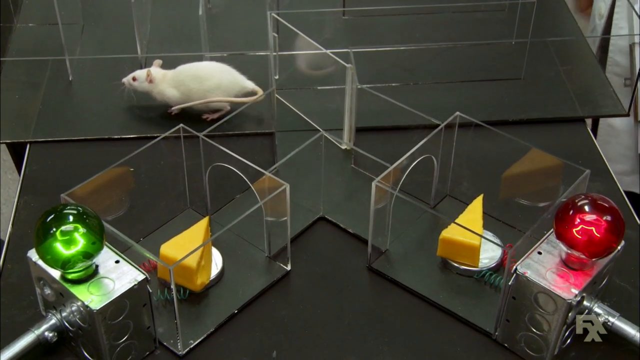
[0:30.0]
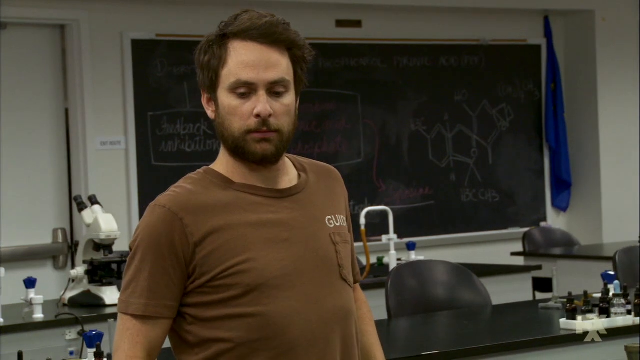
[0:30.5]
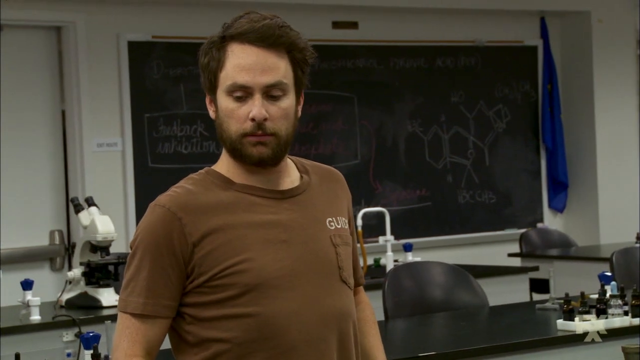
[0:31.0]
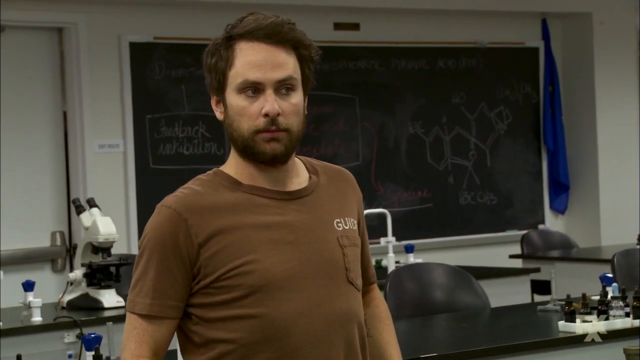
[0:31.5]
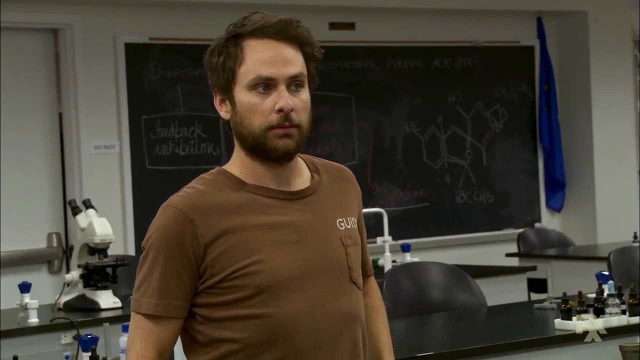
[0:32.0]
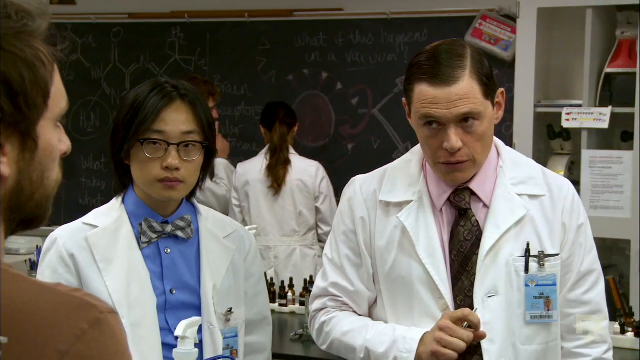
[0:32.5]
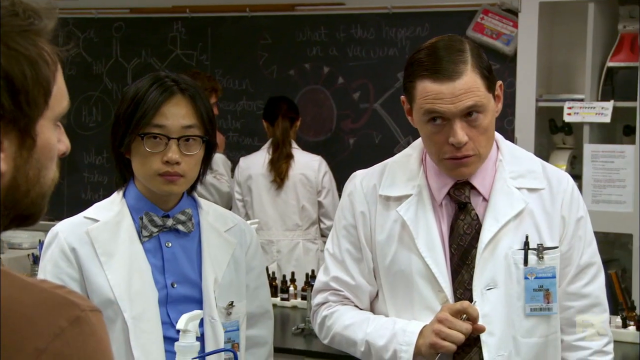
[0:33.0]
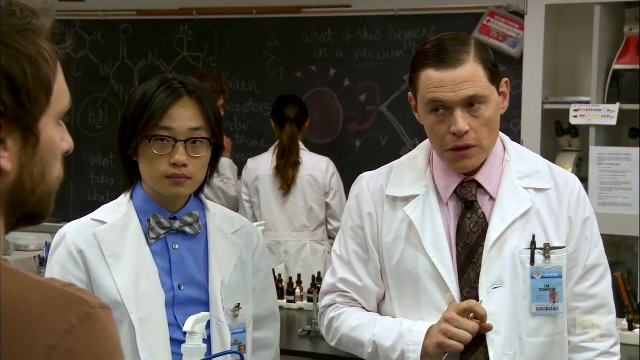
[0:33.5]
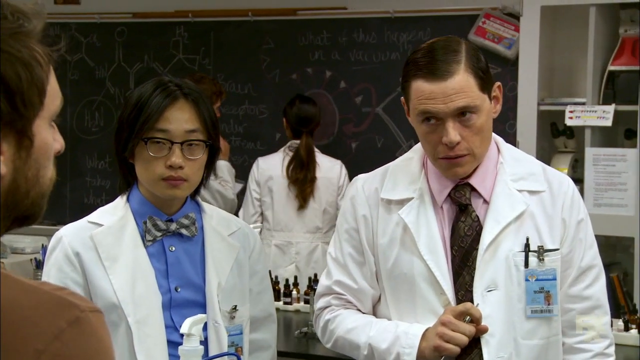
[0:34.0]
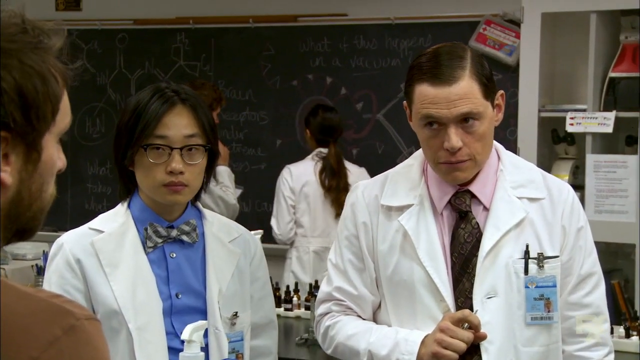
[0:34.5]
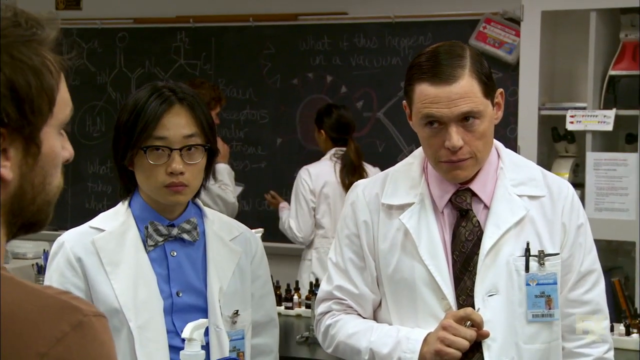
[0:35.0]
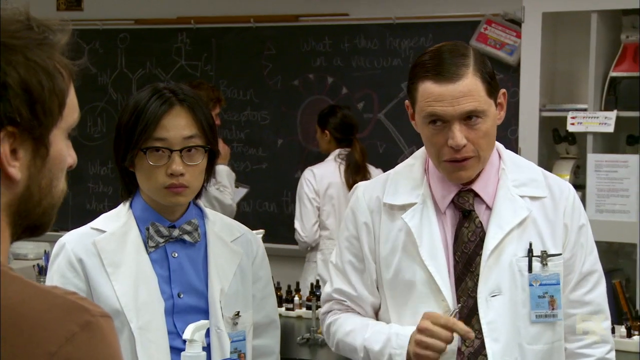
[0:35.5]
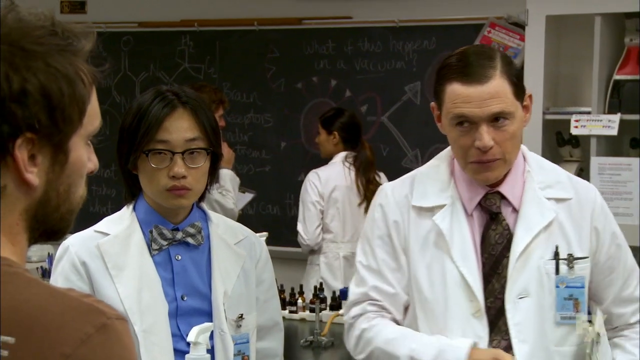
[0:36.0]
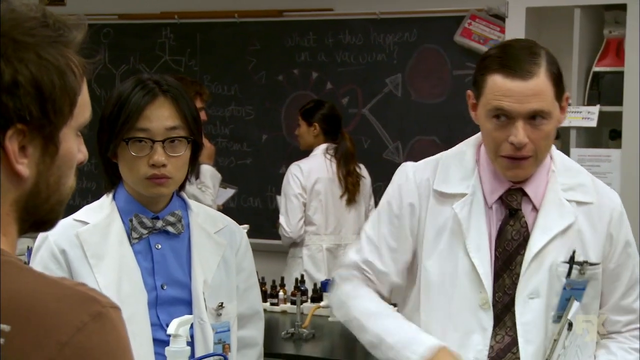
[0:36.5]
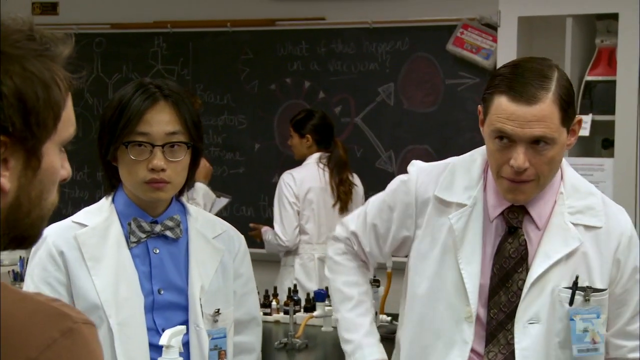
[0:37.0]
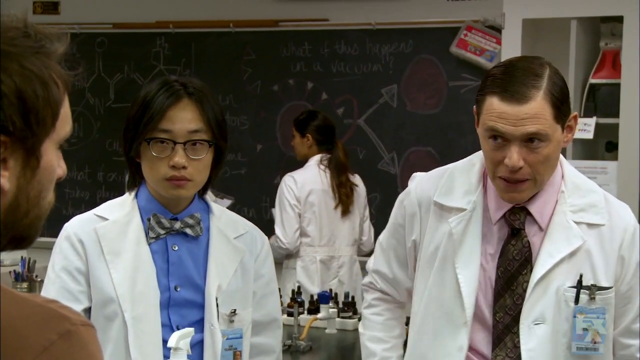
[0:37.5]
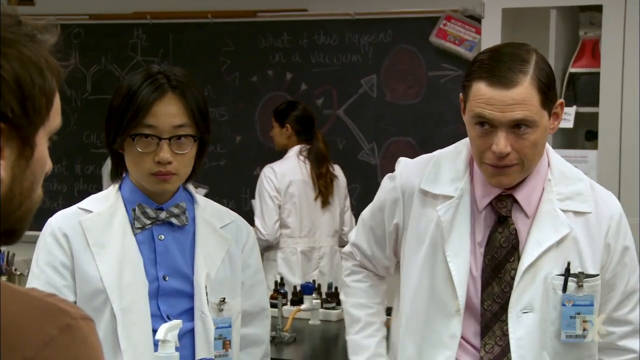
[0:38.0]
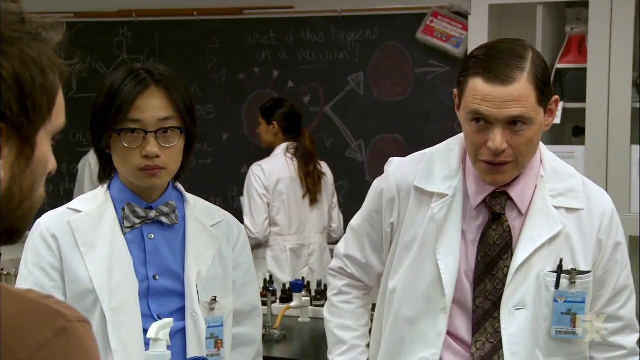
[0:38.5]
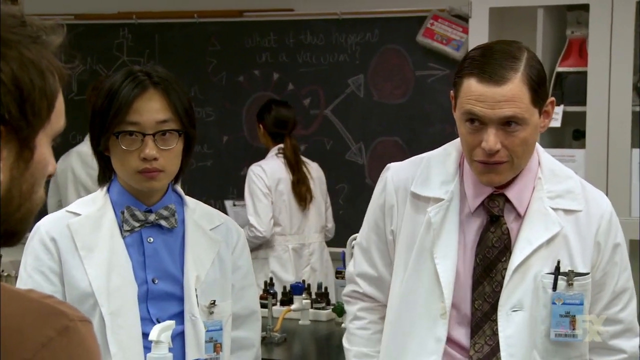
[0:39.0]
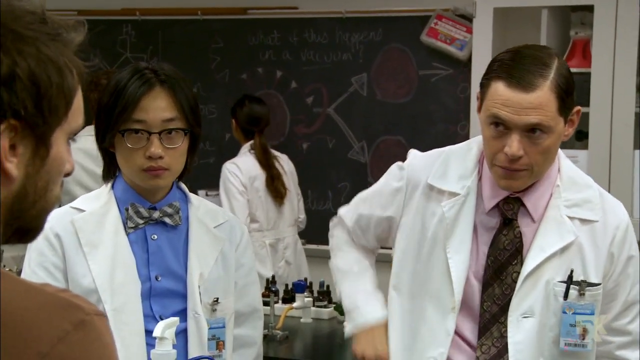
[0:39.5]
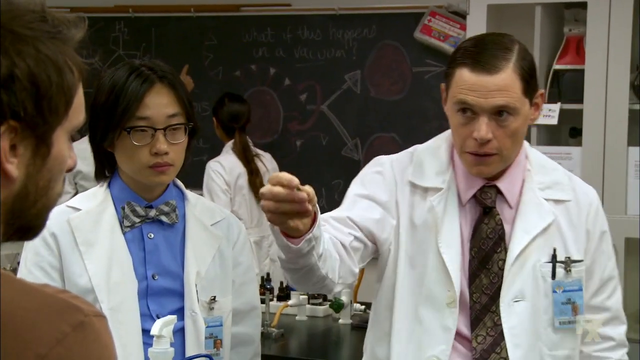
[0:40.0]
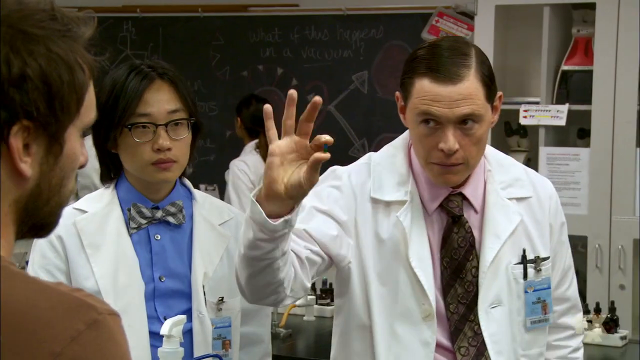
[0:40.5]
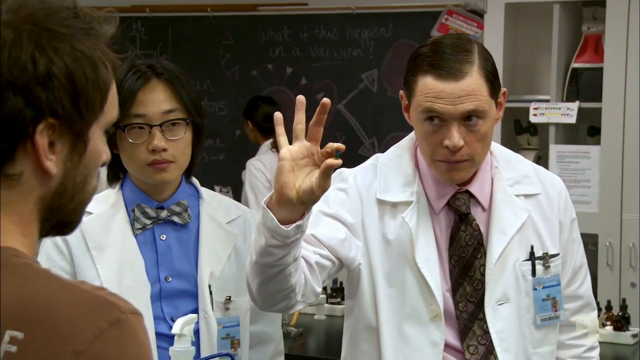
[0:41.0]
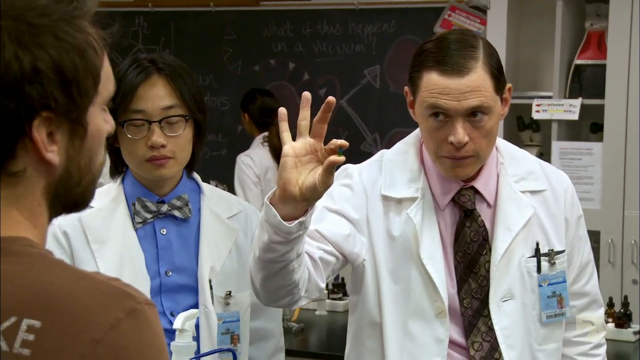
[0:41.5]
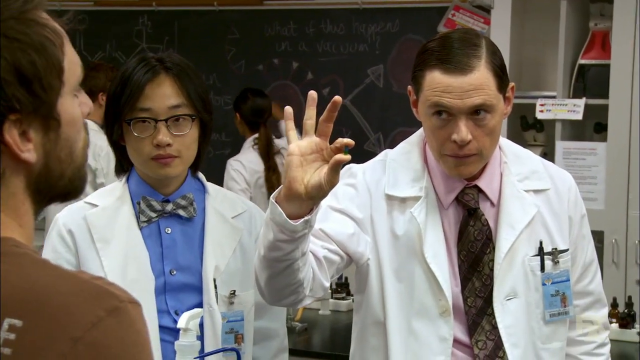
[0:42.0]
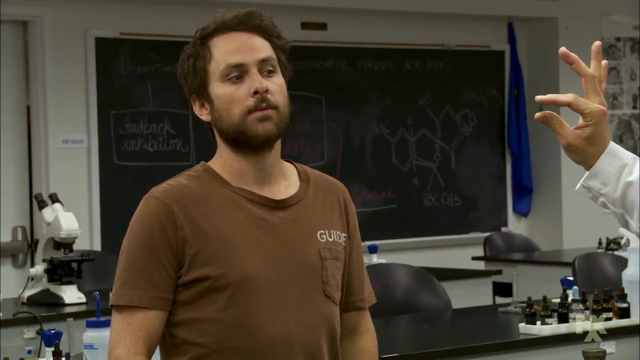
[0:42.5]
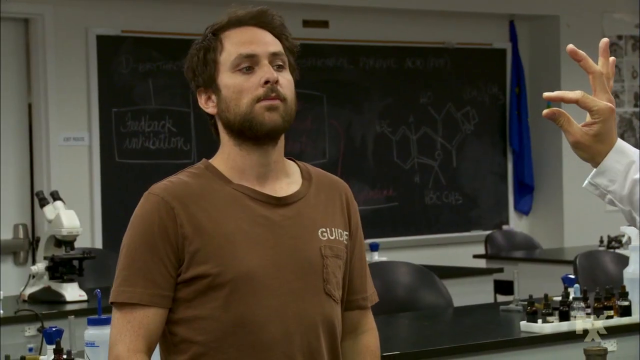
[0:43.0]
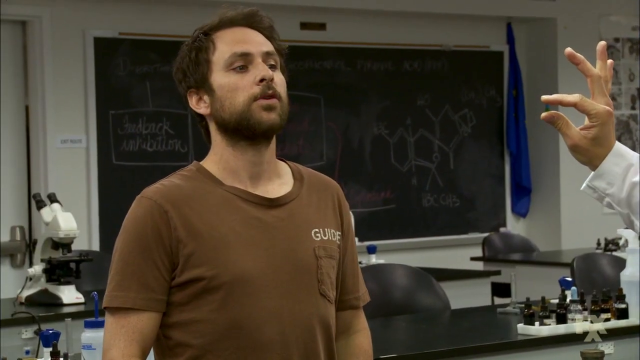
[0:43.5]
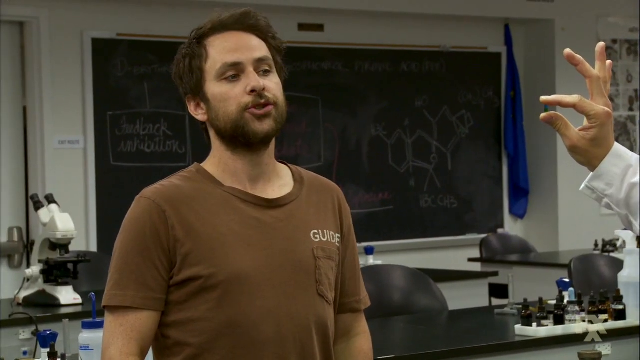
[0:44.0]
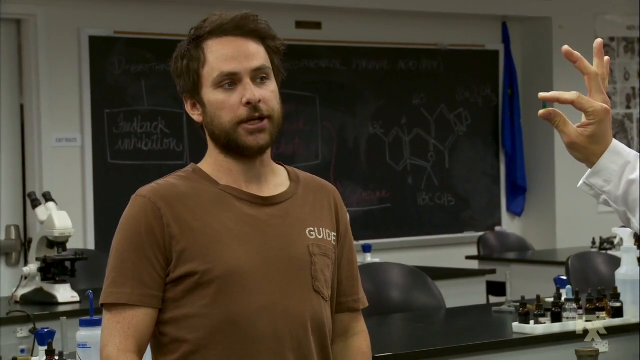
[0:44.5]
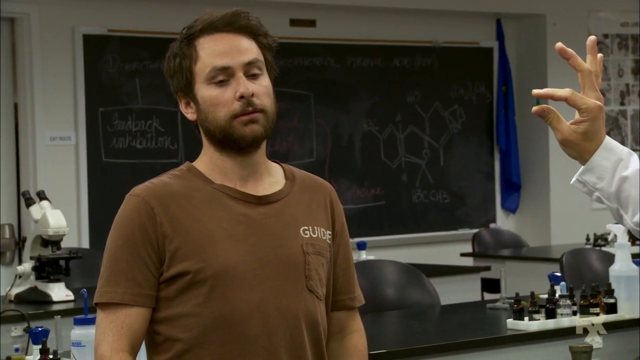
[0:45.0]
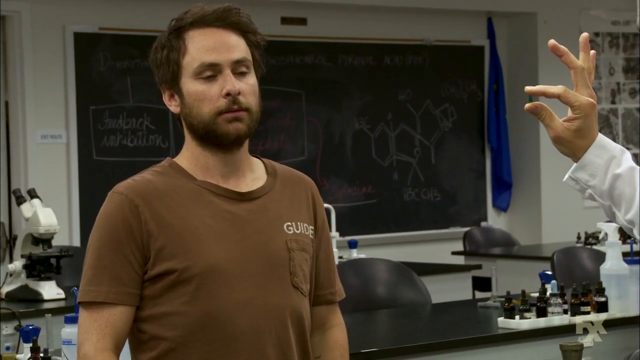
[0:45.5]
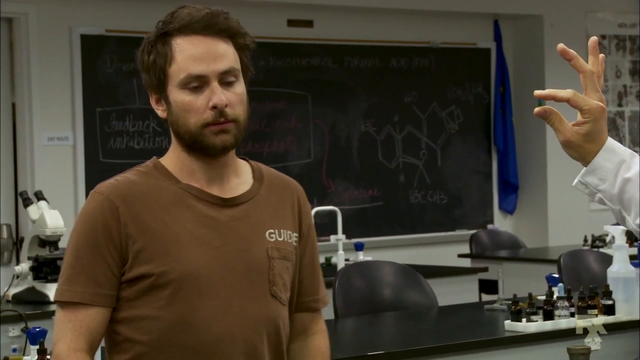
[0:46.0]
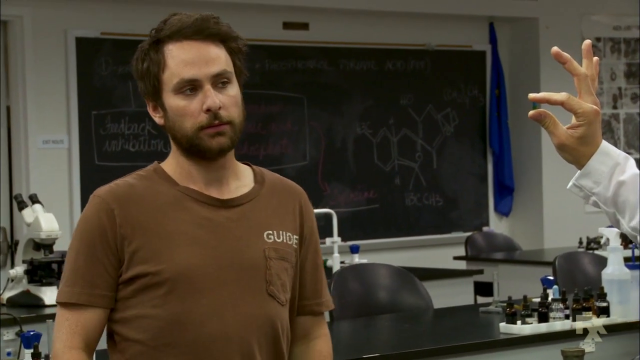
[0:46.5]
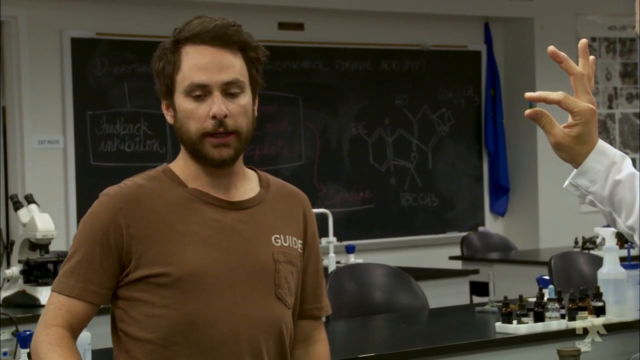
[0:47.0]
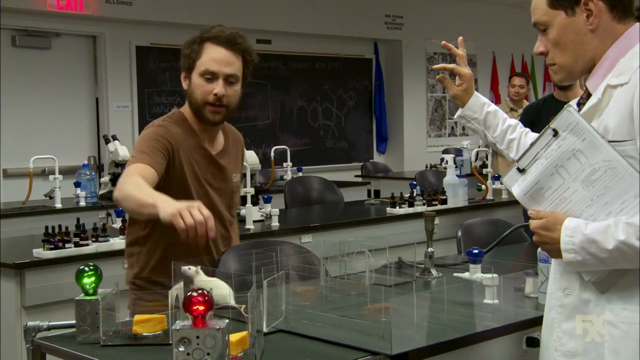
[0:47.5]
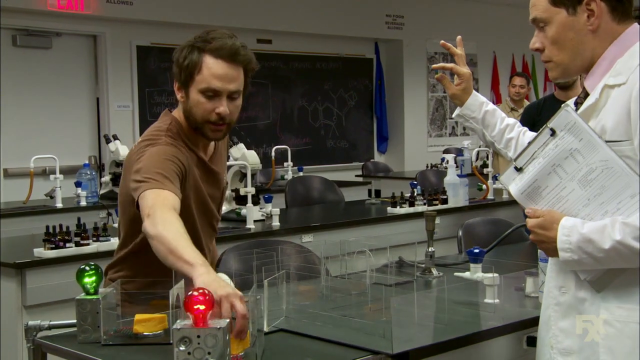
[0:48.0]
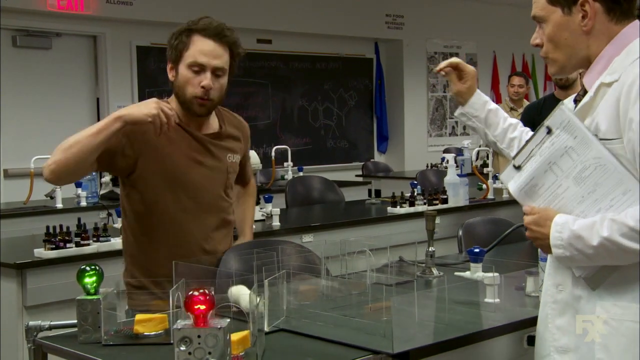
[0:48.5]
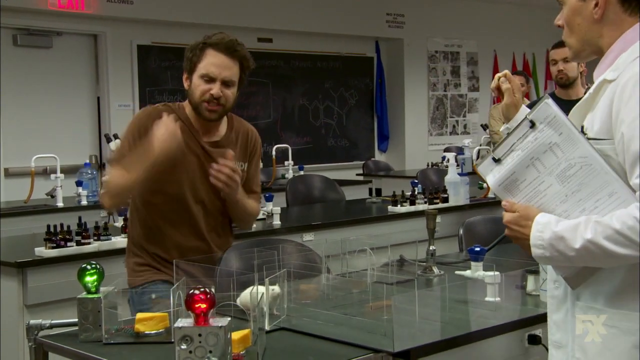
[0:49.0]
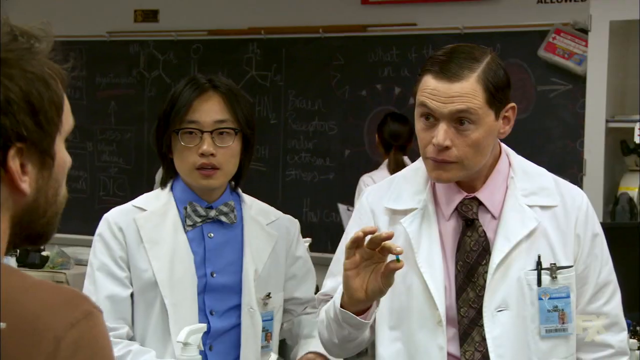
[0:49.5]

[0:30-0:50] A close-up shows the man in the brown shirt, who has a kind of overgrown beard and longer, wavy, thick hair. He gives a side eye to the man with the clipboard, lifts his left elbow slightly, and looks uncomfortable. The shot cuts to the man with the clipboard and his assistant, with two people in the background writing on the chalkboard. The scientist or technician makes a comment and gestures, pointing with a pencil or pen in his hand, then digs his right hand into his pocket, pulls something out and holds it up in front of him between his index finger and thumb, almost like an A-OK sign. The man in the brown shirt straightens up and looks down at what the man is holding. He makes a comment and raises his left brow, unsure. He shifts his weight, reaches down into the plastic, and pulls back as if shocked. He is frantic and grabs his hands.